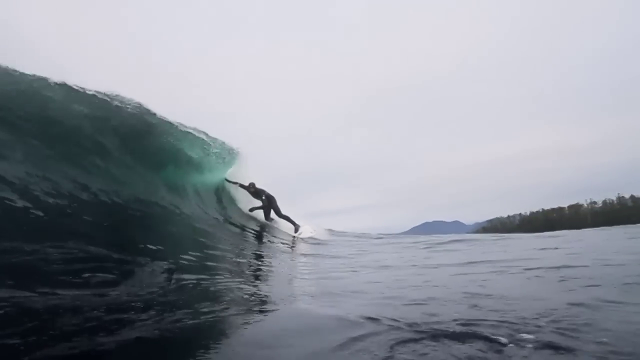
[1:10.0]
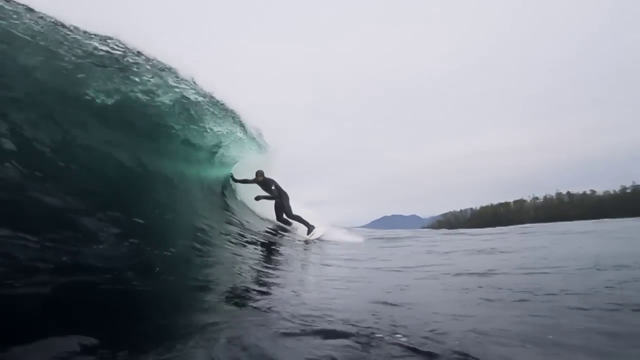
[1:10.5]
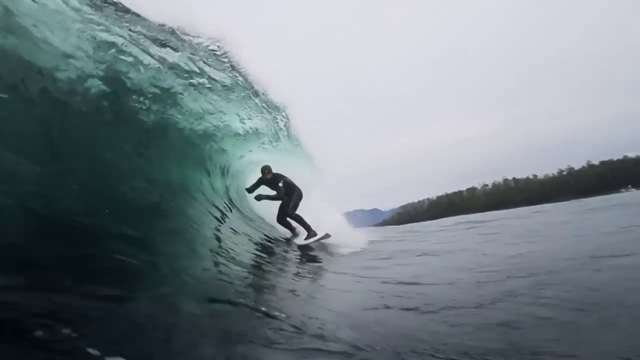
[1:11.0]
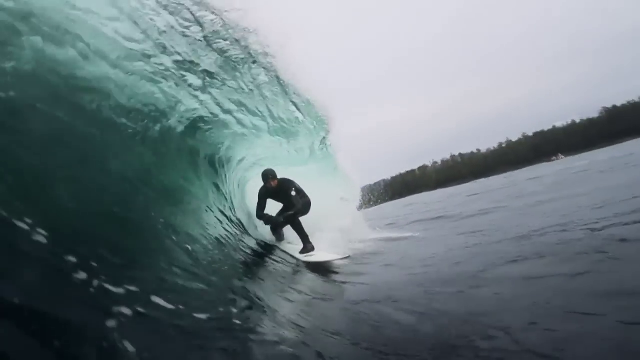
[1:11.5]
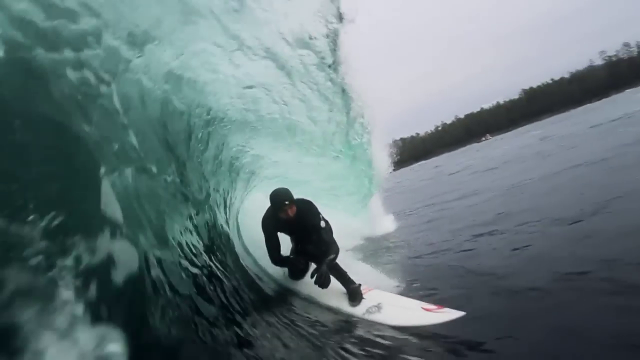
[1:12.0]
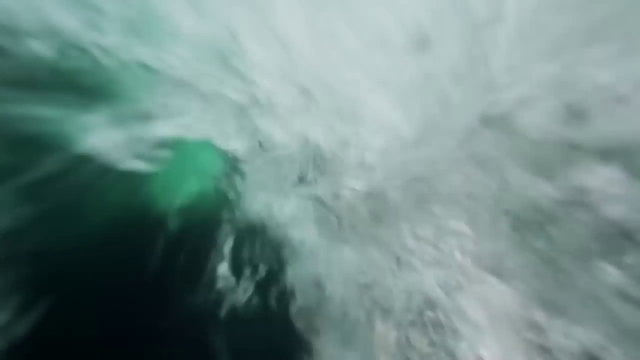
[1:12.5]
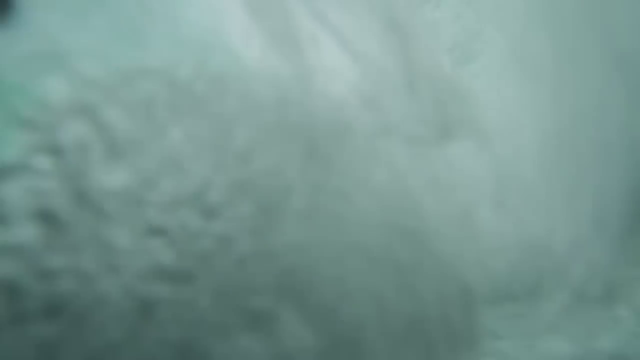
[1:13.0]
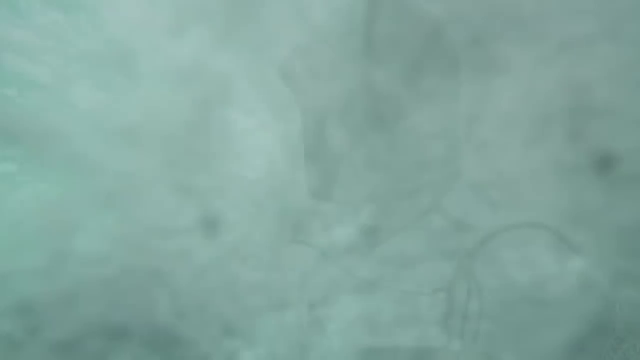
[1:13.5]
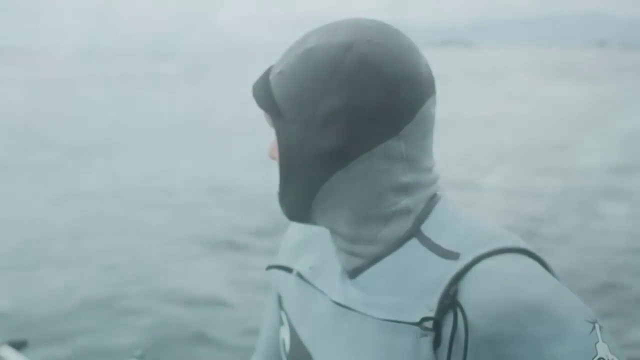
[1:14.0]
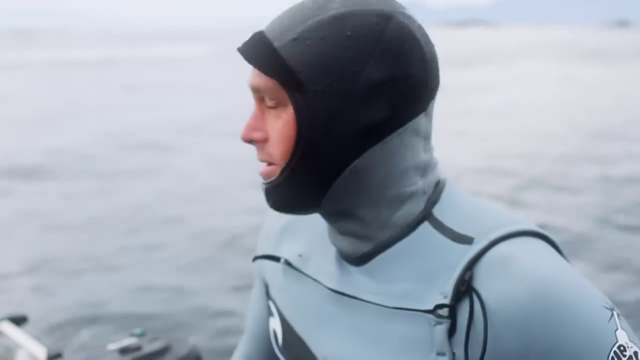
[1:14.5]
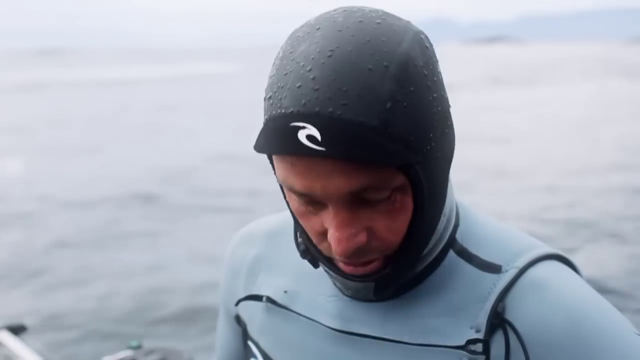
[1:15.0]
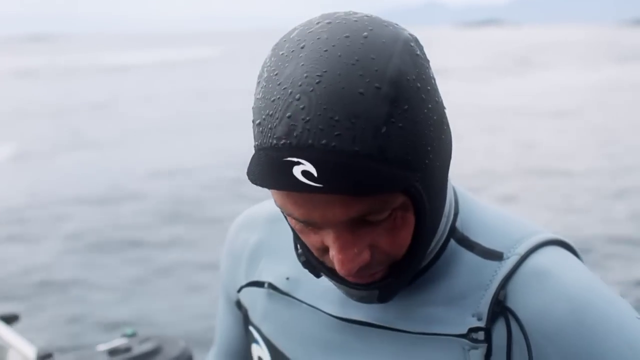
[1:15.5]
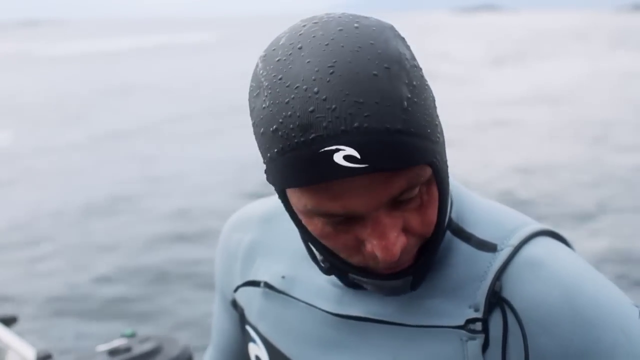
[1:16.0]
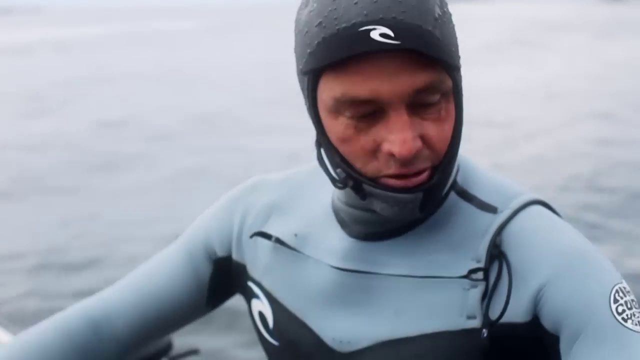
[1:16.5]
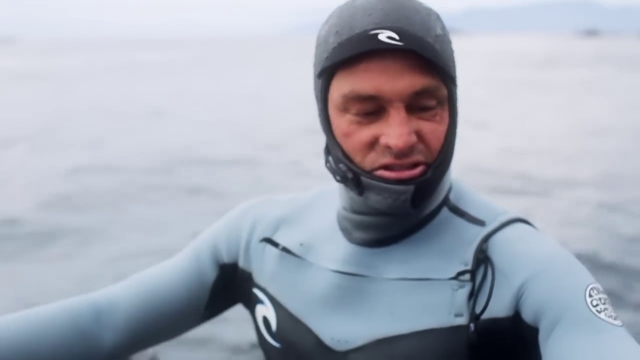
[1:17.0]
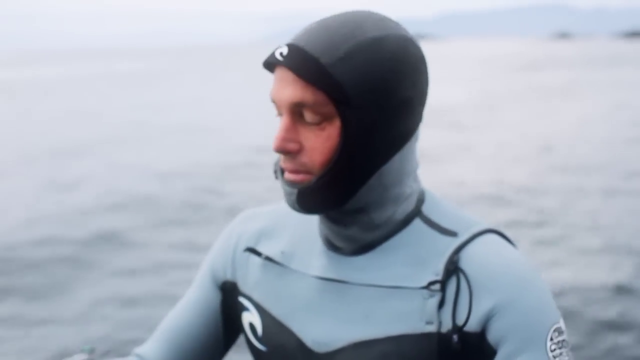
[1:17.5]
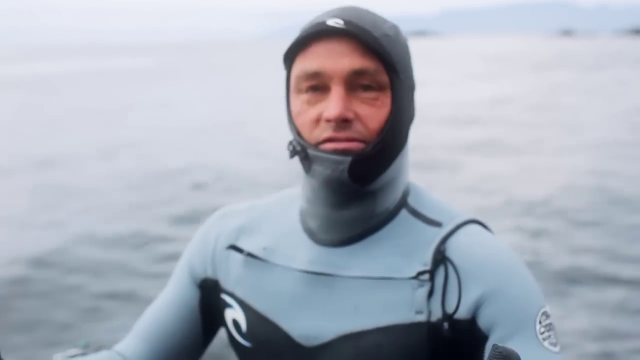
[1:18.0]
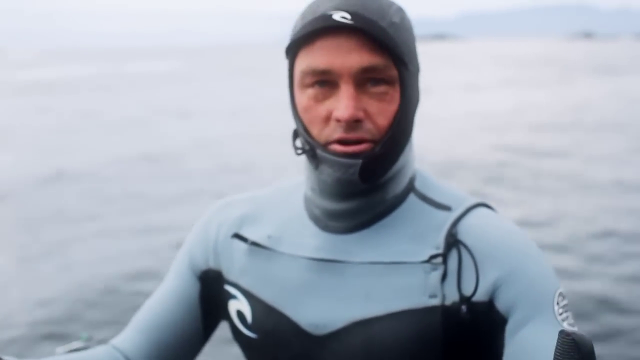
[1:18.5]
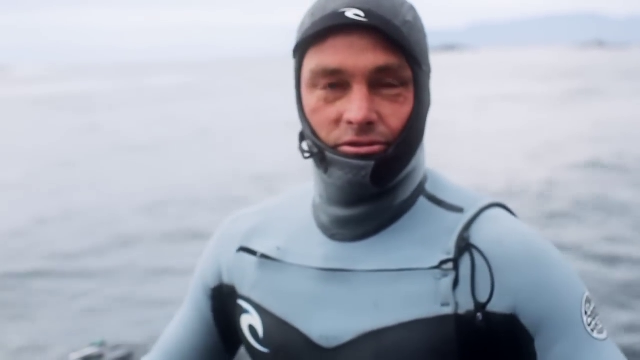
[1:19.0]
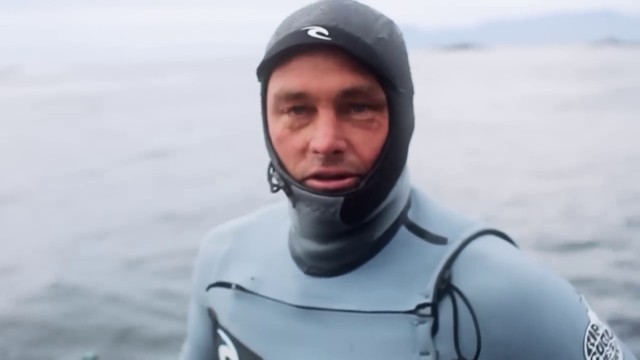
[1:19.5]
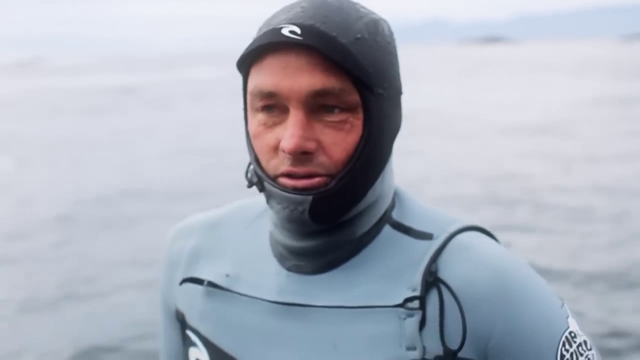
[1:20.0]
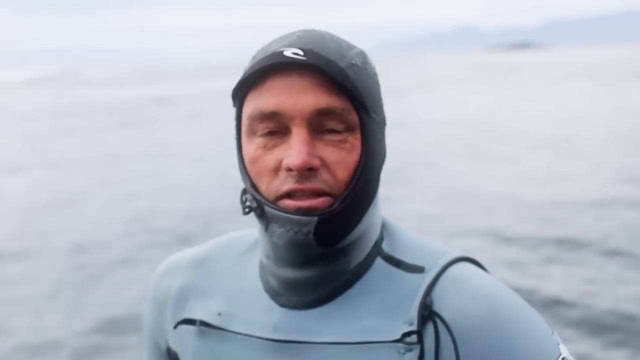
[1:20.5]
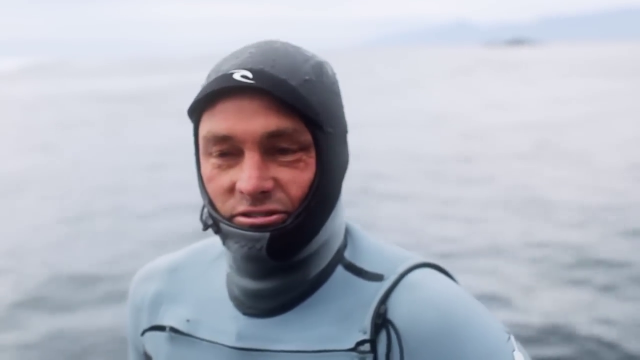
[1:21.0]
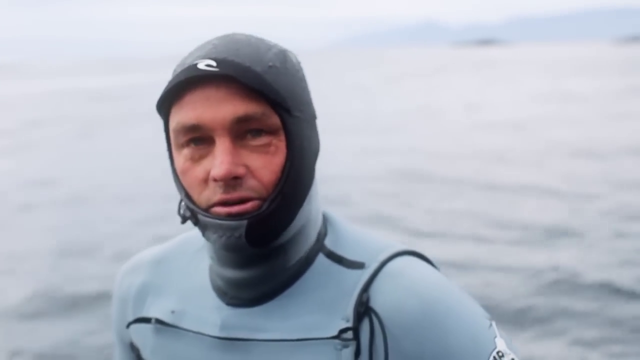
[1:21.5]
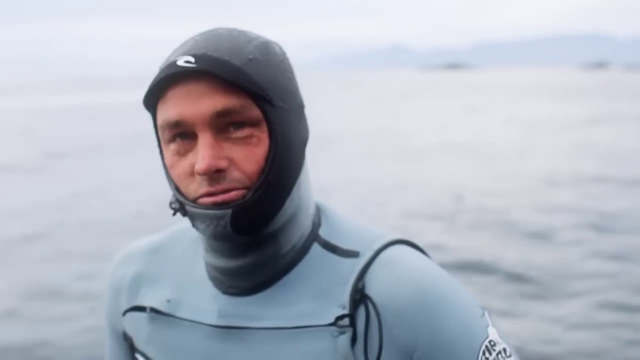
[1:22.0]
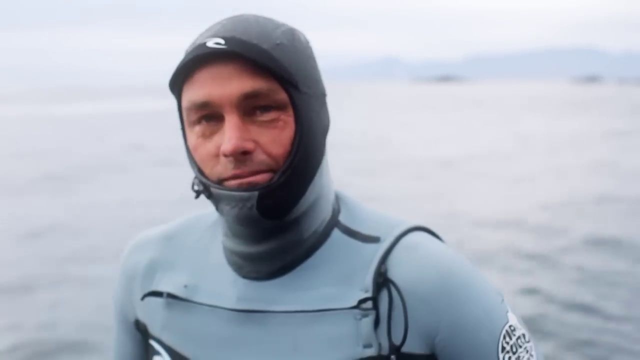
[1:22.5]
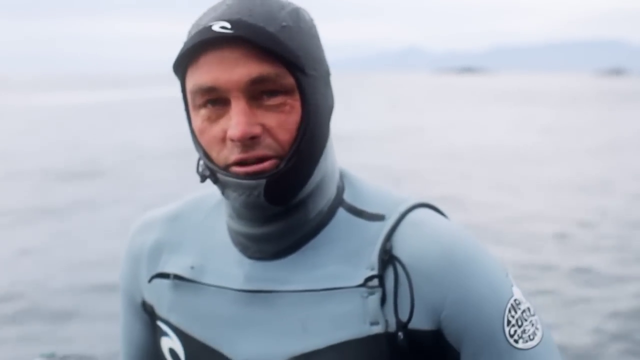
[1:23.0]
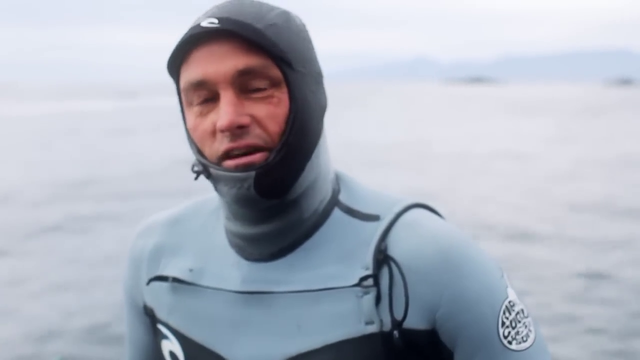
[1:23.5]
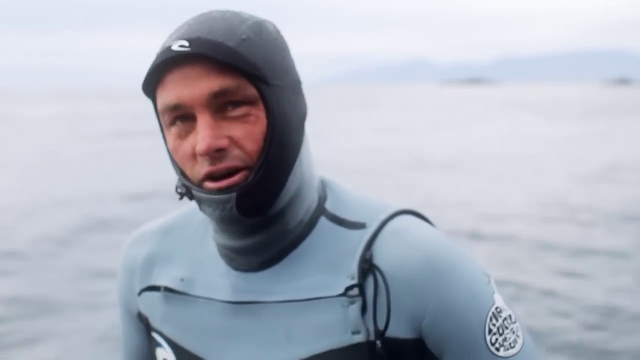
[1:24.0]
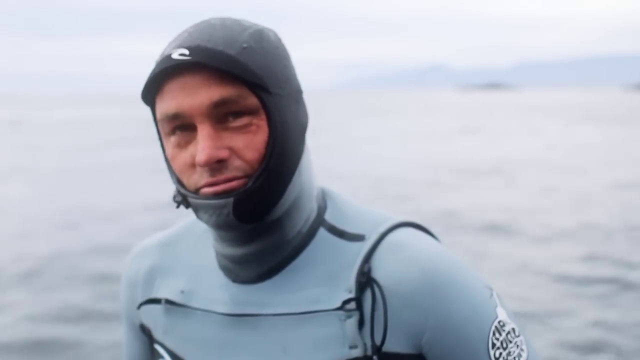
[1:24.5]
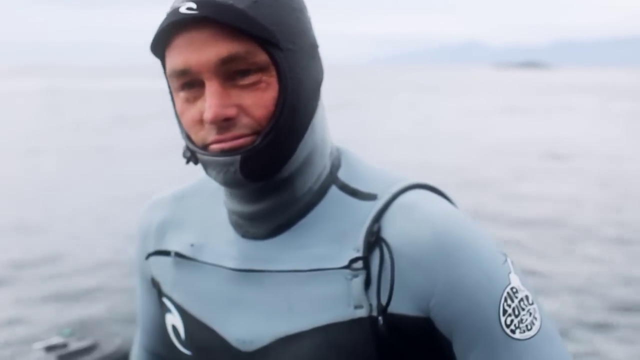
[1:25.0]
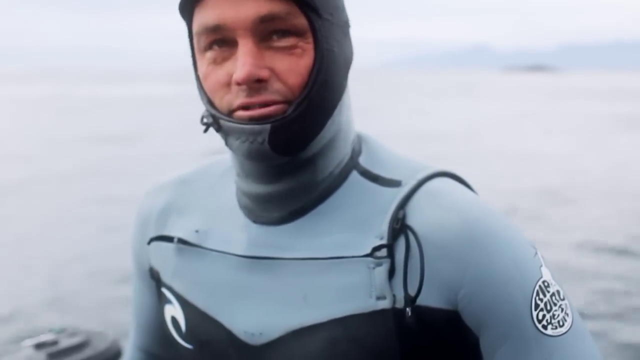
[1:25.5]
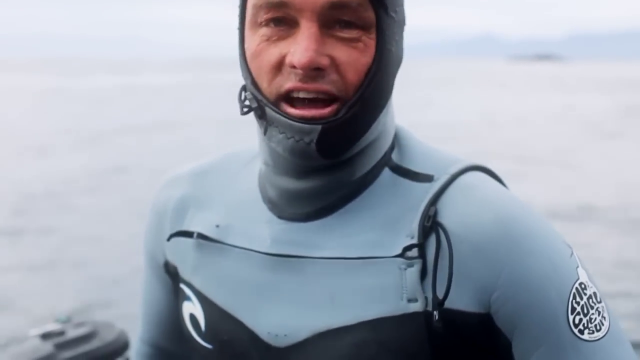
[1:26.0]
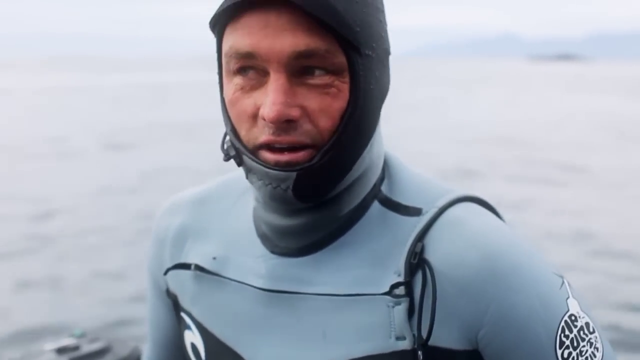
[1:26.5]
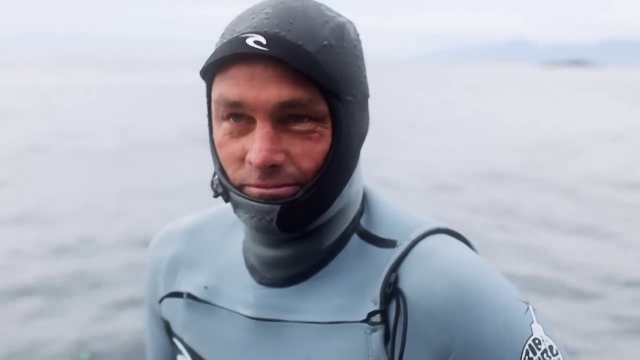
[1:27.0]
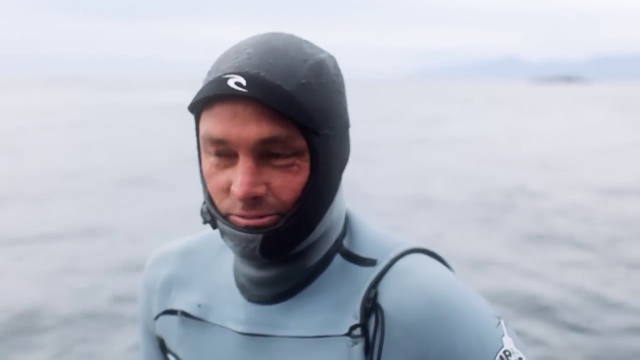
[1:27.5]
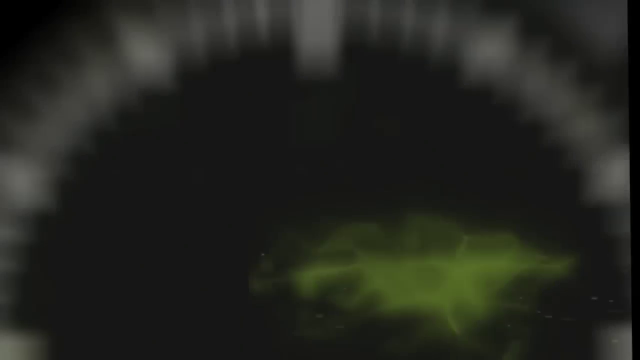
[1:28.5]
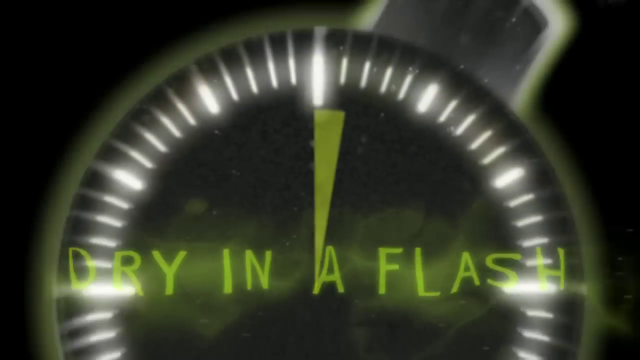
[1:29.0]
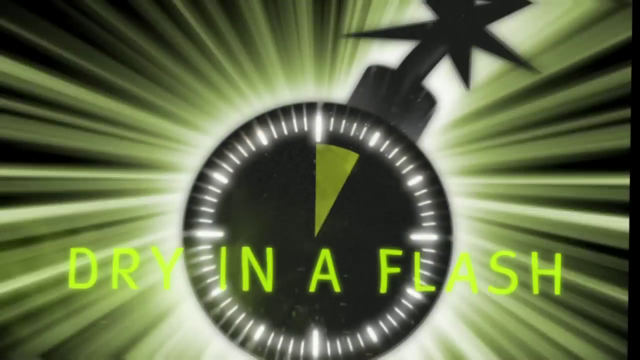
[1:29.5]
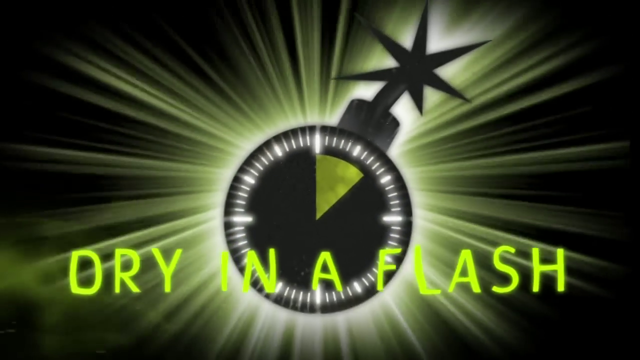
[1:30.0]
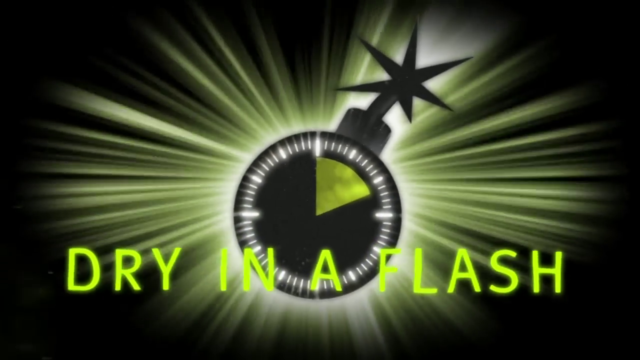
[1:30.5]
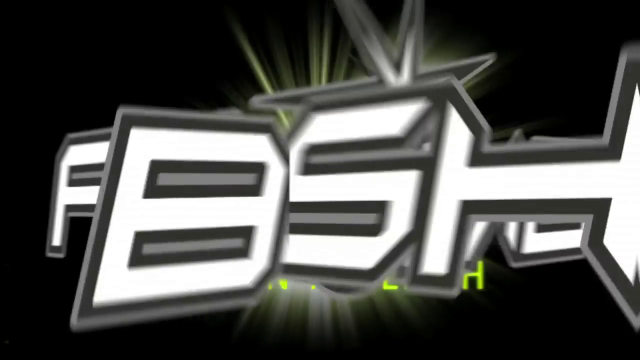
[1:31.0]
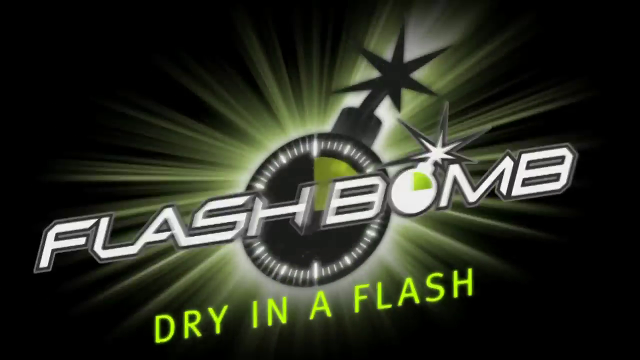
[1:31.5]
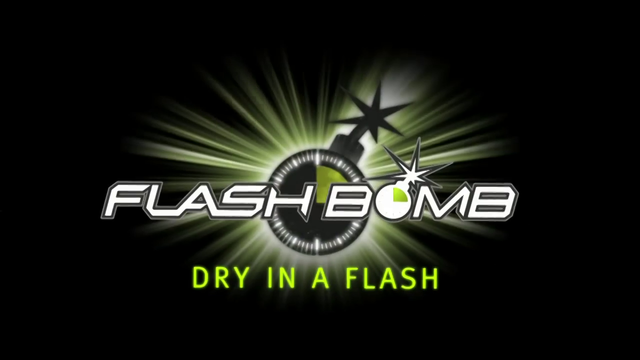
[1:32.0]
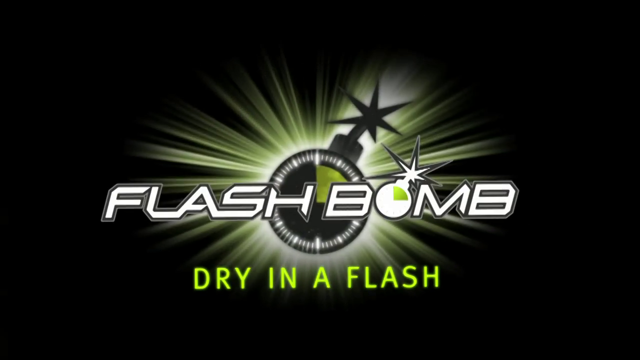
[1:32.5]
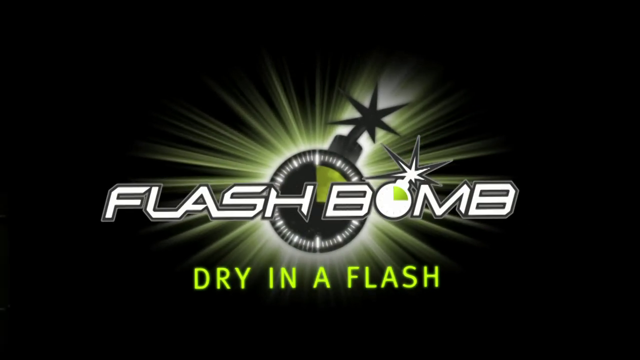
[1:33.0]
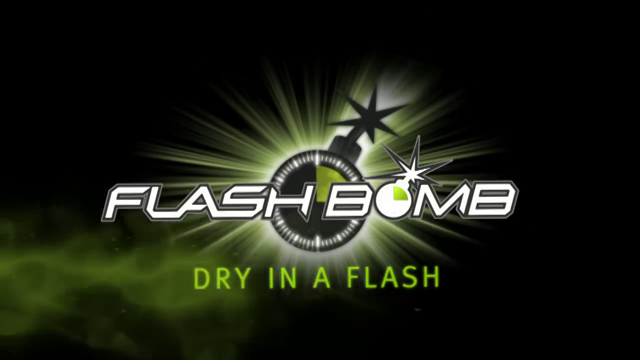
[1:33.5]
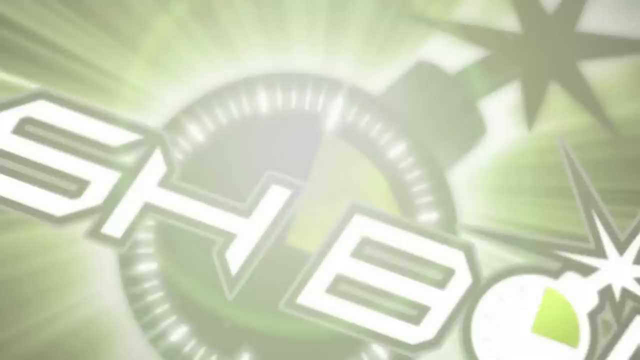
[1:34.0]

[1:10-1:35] A man in a wetsuit on a board is right in the wave, stretched out and leaning into it, with his hand stretched out touching the center of the wave, which looks like it is about to crash right over him. Trees are in the background, and there seems to be a mountain in the bottom right corner. The sky looks white rather than blue, and the water looks green. He seems to go fast enough to escape right through it, and the camera goes right through the water, seeming to move away from him. Then he is shown standing to talk, with only his face visible: the wetsuit has a black part over his head, while the wetsuit itself is white. It covers everything up to his bottom lip, a little of his forehead shows, and it comes to right beside his eyes. The ocean is behind him, blurry while he is in focus, and he continues talking. The Rip Curl logo is on his arm. Then the bomb logo returns with "dry in a flash" in yellow on the black background, a bright yellow light behind it, and the timer on the little bomb. "Flash bomb" appears again in white.